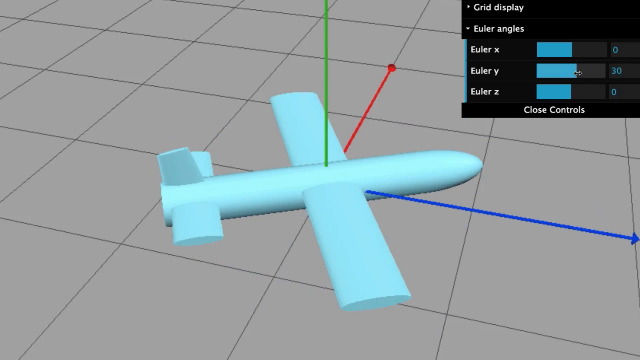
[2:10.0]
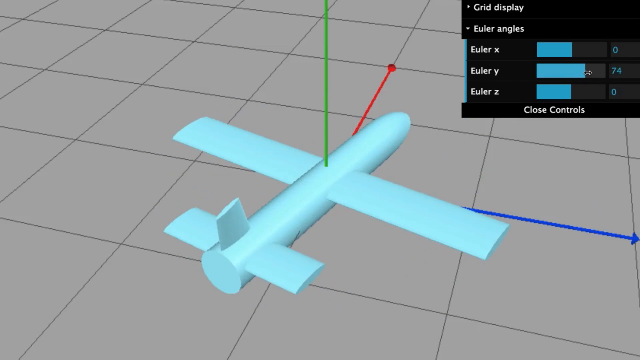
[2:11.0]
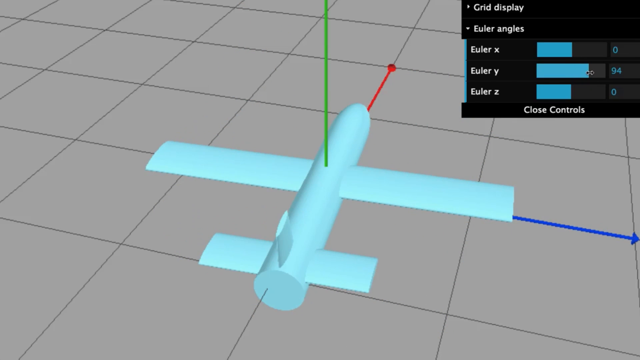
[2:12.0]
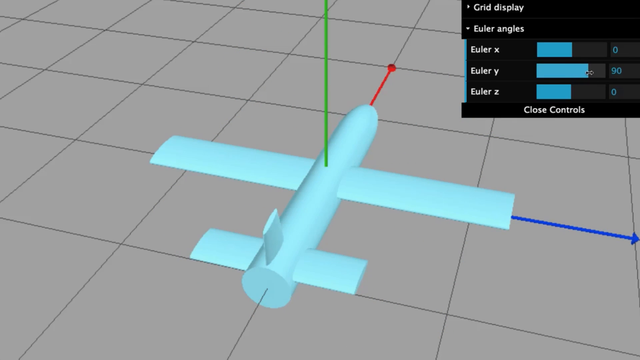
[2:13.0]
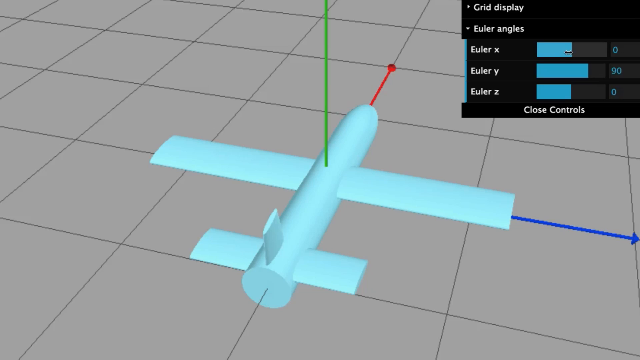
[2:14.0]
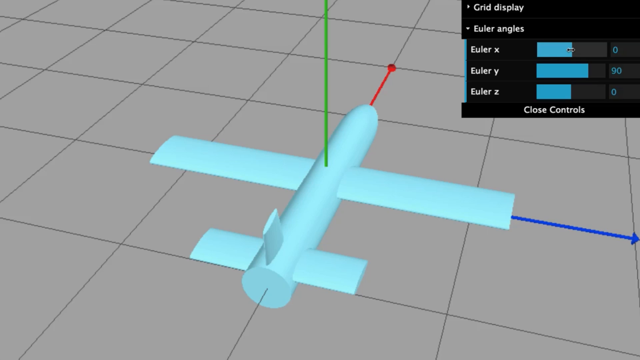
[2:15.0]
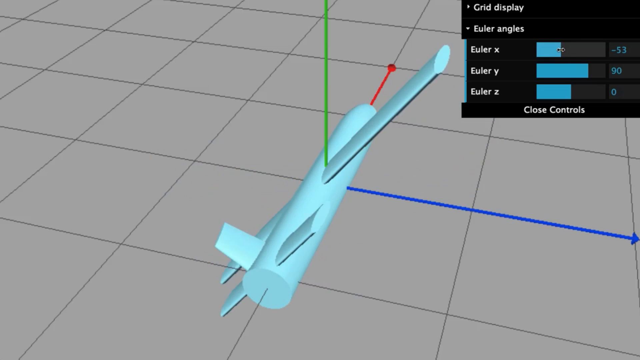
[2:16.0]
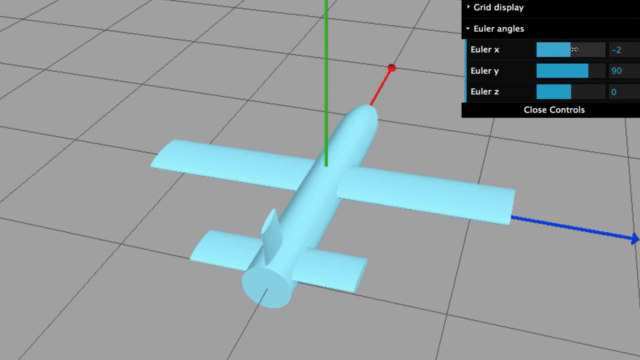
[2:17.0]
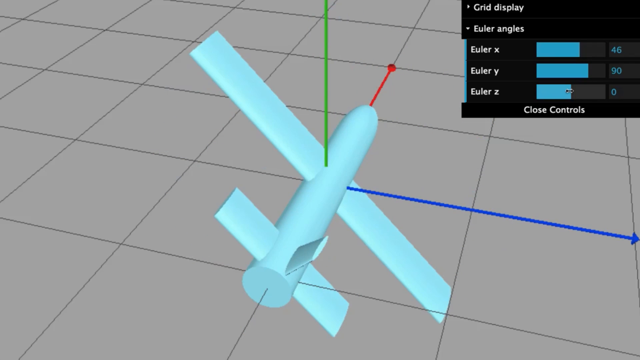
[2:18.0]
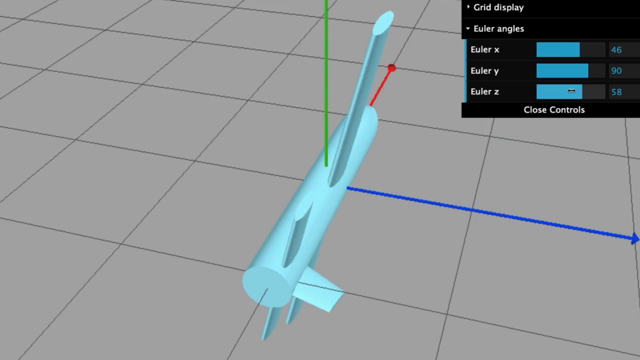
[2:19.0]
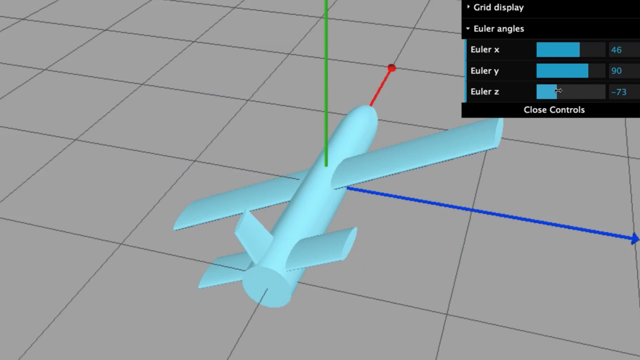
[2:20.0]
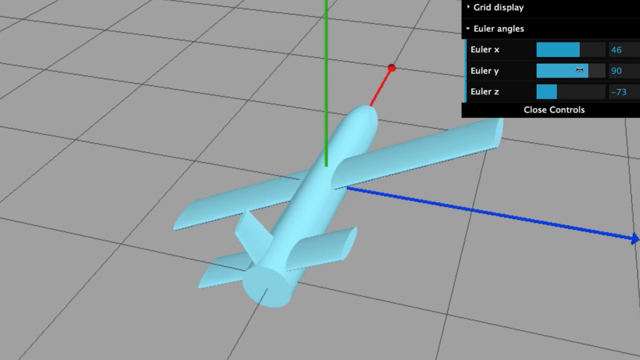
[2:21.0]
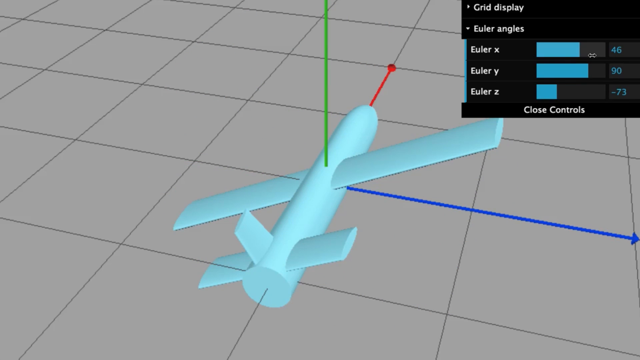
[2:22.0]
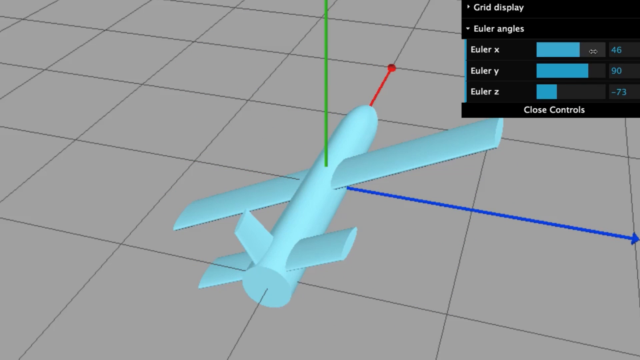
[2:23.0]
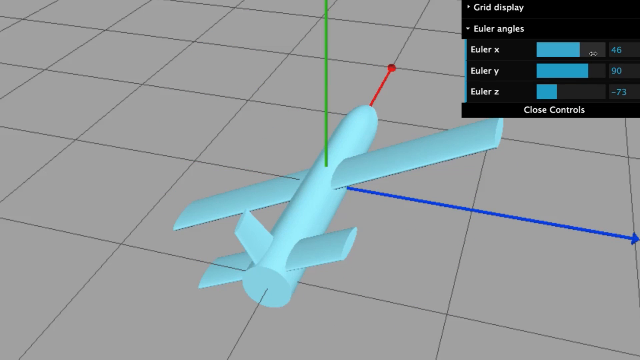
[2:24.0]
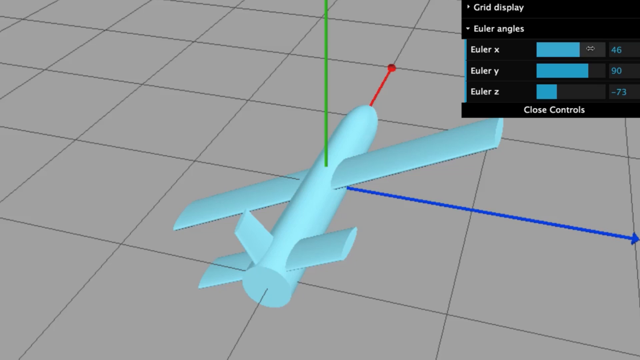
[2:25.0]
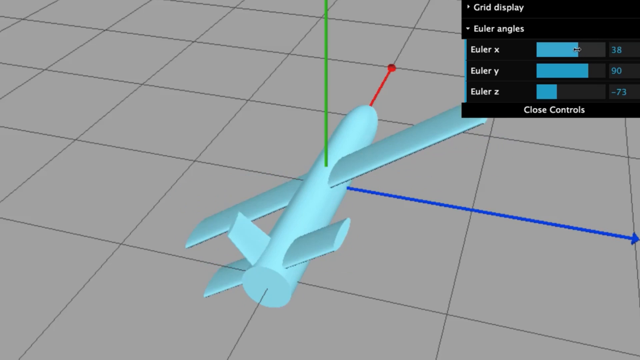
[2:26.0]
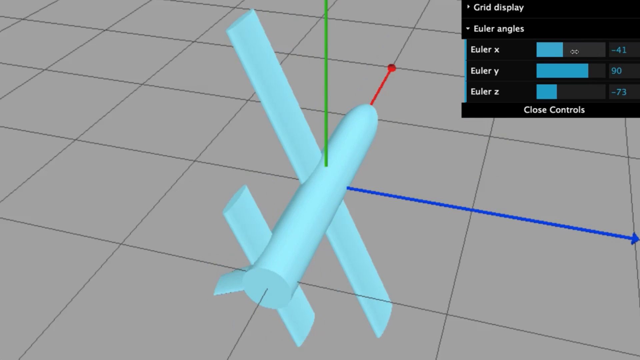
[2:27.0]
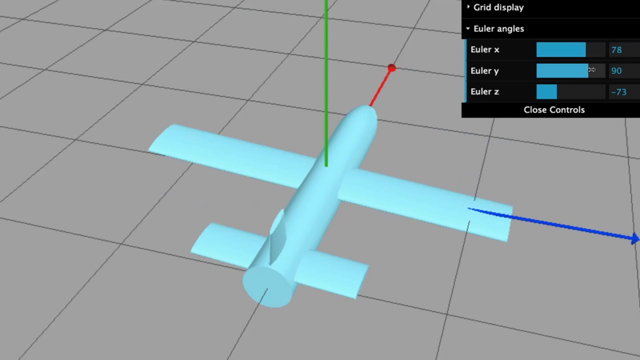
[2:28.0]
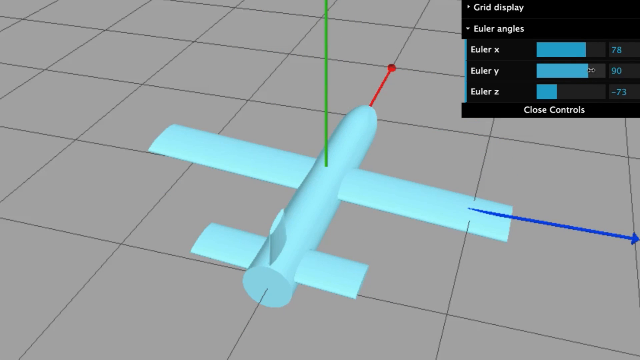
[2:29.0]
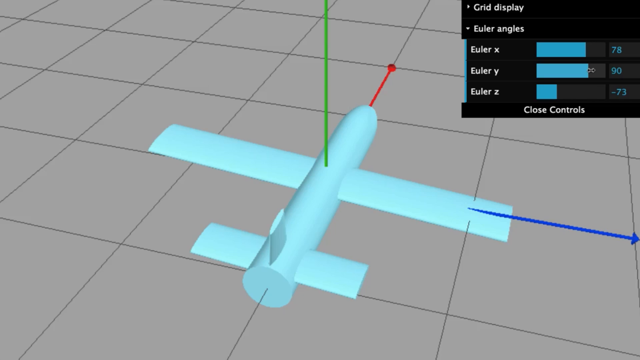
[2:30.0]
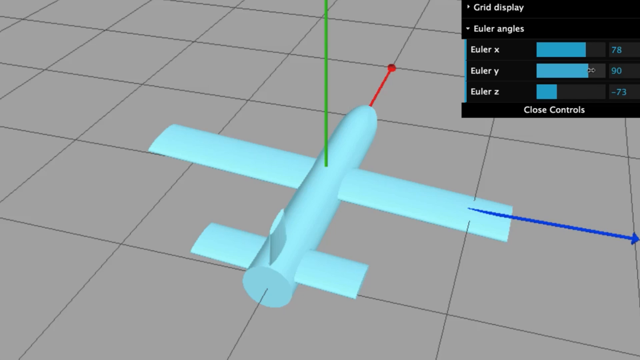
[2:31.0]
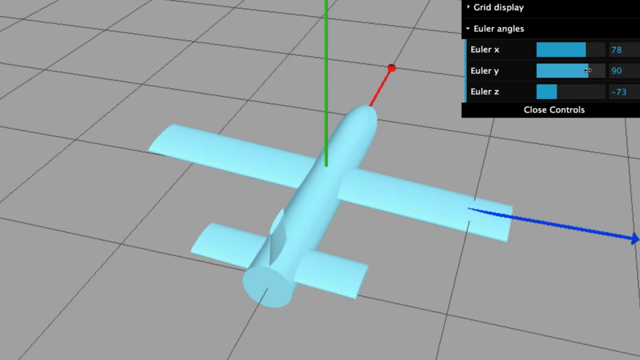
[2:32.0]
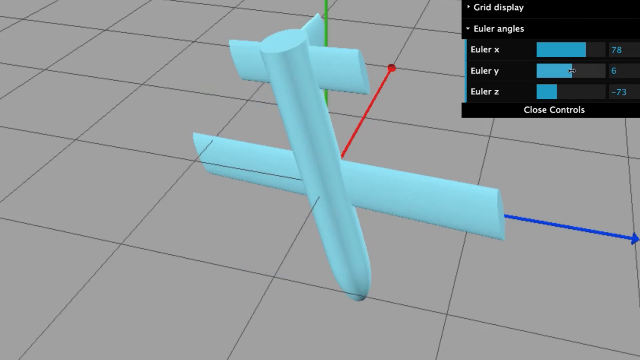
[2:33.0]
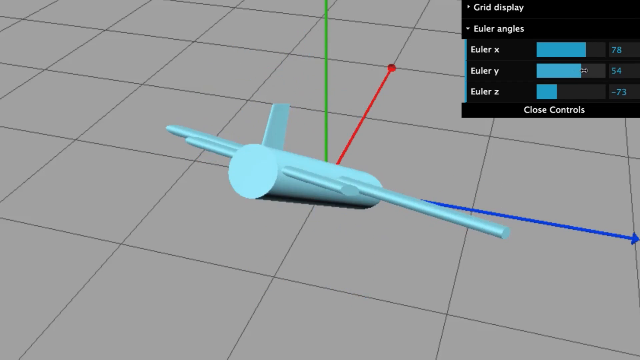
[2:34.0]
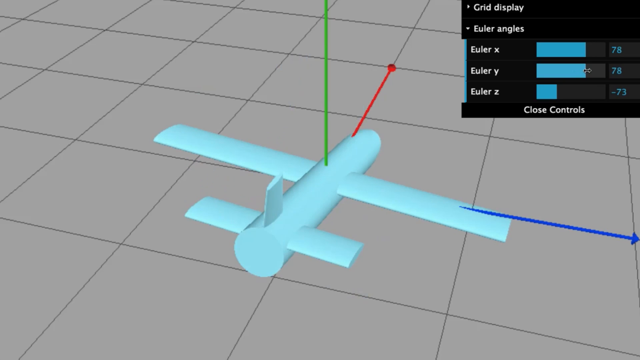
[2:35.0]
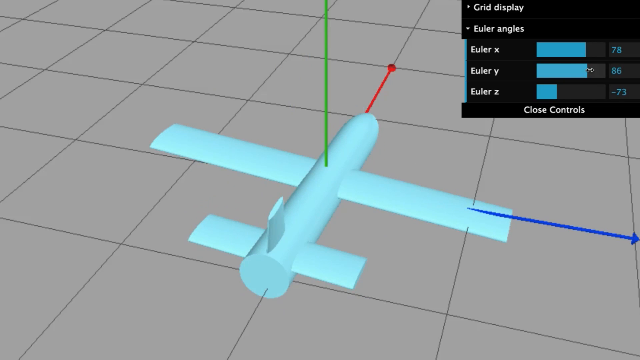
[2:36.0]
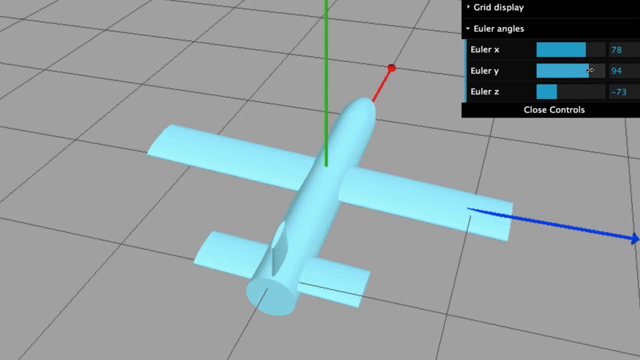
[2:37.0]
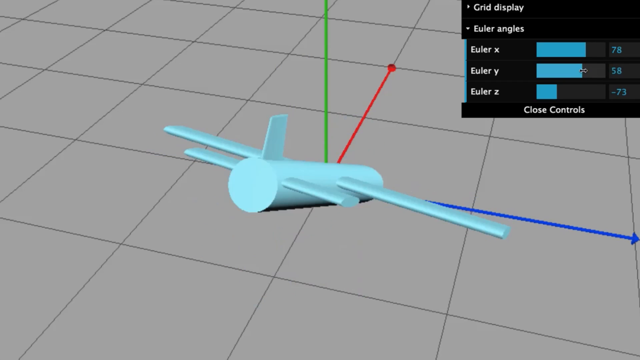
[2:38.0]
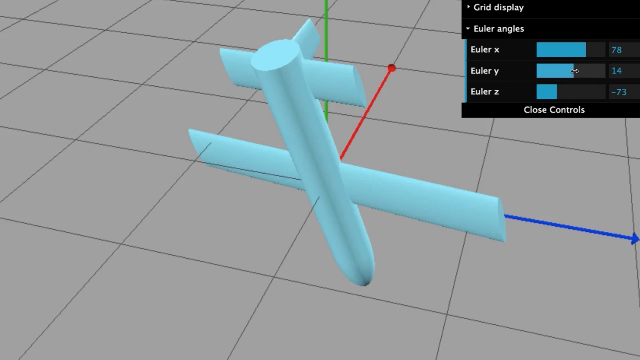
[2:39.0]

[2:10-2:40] The whole screen is made up of light gray squares, with a light blue airplane model in the middle. It has no windows and no wheels, just a tube for a body, skinny rectangles coming off the left and right sides as wings, and at the end two smaller wings and a fin on the top. A green line comes down touching the top of it, a blue line comes in from the right side of the screen, and there is also a red line. Someone takes their pointer and touches certain areas of the screen, and as it moves, the airplane model moves around so it can be viewed from different angles. In the top right-hand corner is a smaller black screen with "grid display" in white at the top, "Euler angles" beneath it, and then a list reading "Euler X", "Euler Y" and "Euler Z", each with a progress bar to its right. Some bars are halfway filled with blue and half black, and some have more than others. As the person with the mouse moves the model plane, the bars become more or less blue.